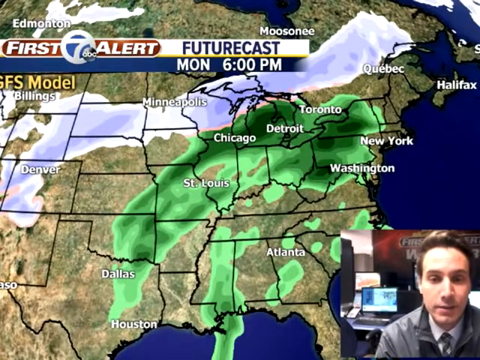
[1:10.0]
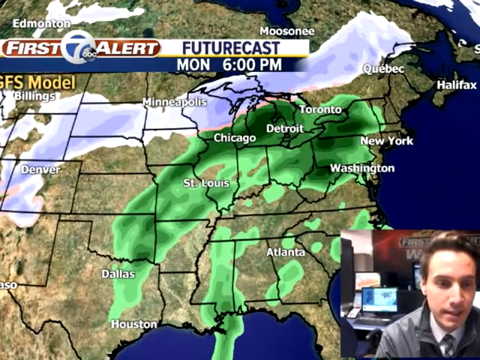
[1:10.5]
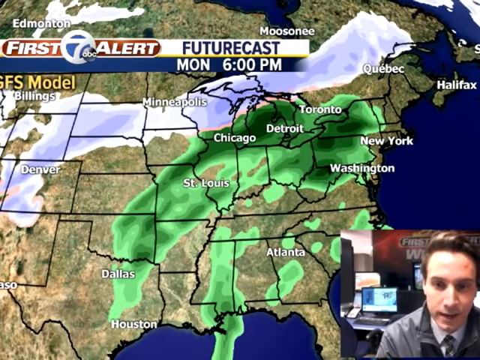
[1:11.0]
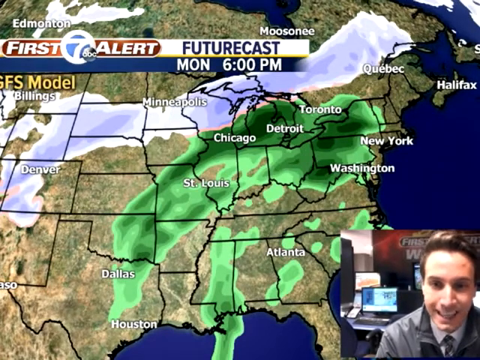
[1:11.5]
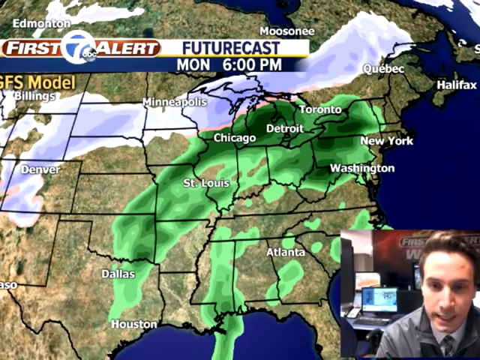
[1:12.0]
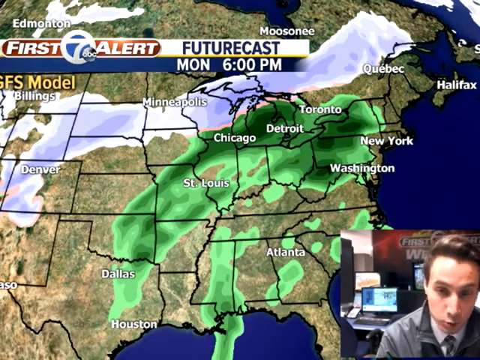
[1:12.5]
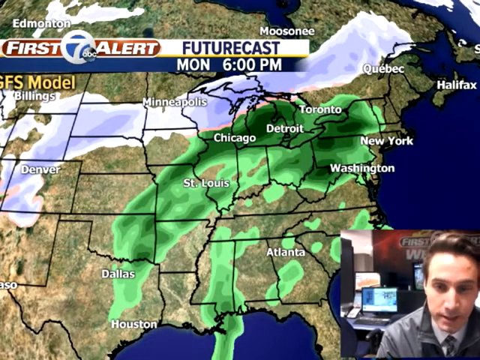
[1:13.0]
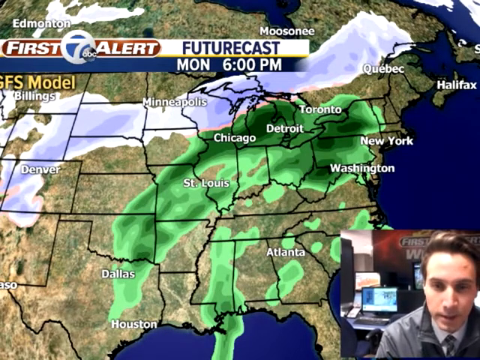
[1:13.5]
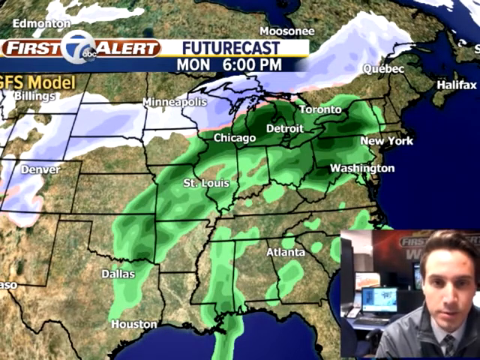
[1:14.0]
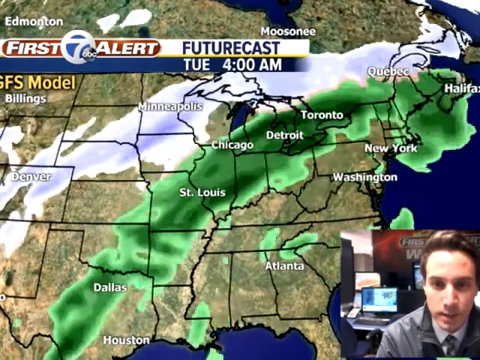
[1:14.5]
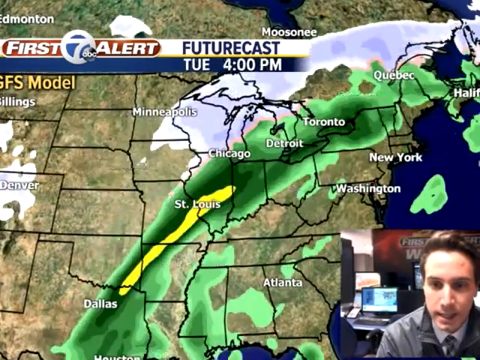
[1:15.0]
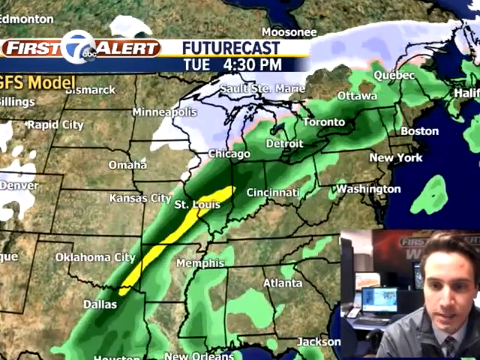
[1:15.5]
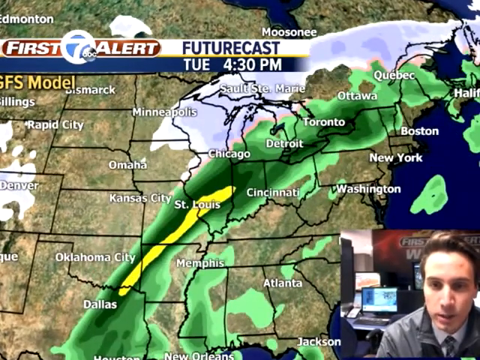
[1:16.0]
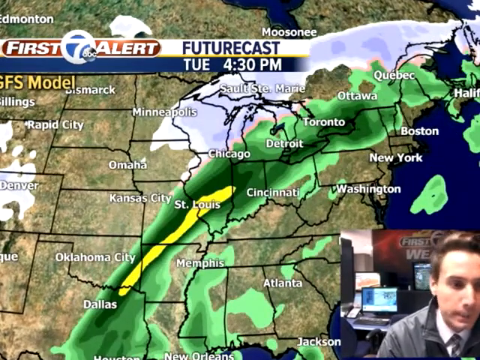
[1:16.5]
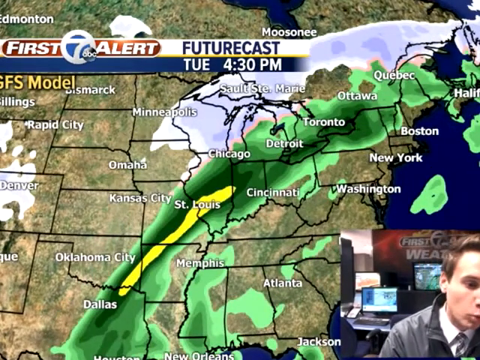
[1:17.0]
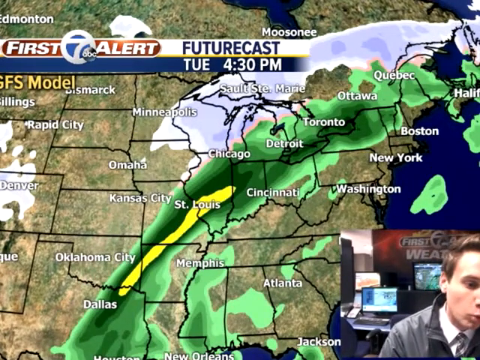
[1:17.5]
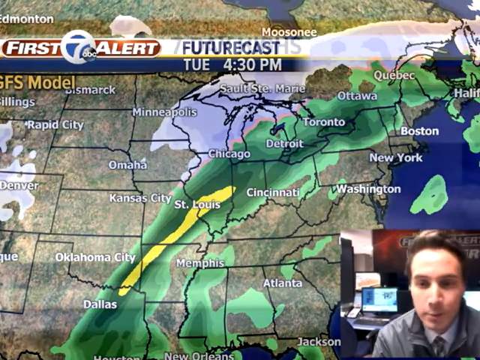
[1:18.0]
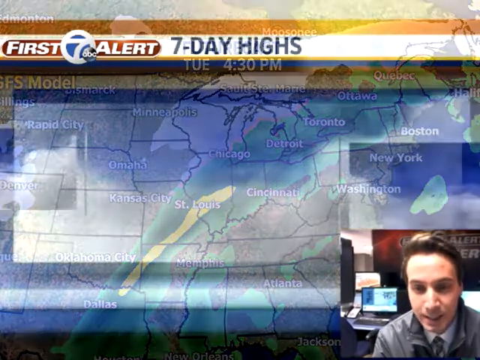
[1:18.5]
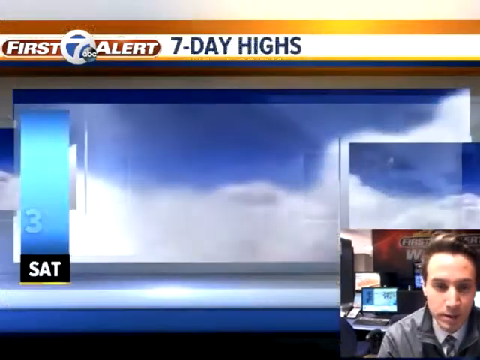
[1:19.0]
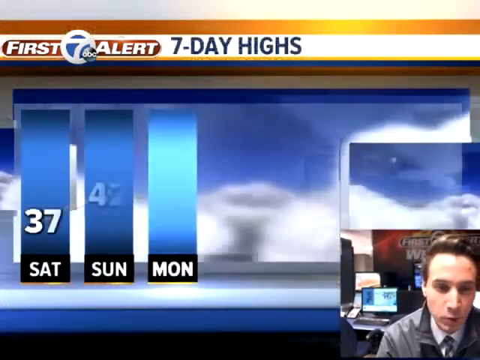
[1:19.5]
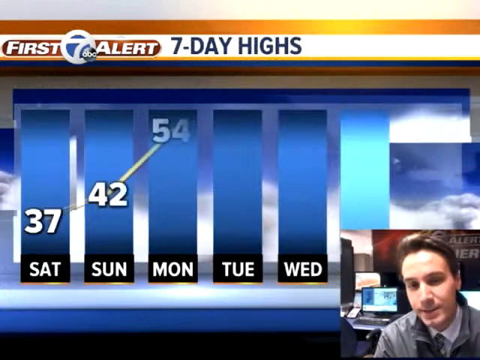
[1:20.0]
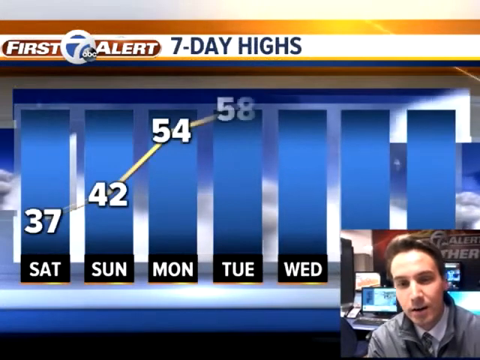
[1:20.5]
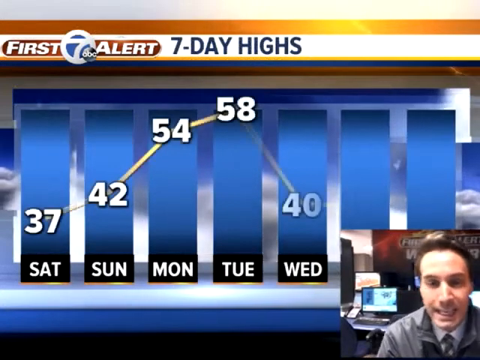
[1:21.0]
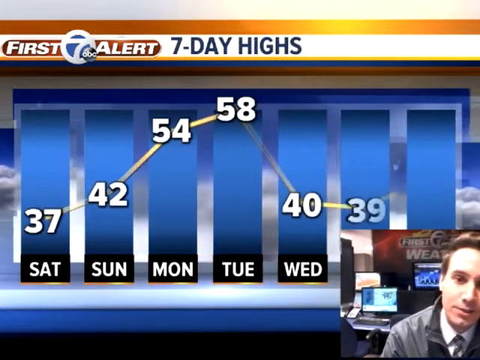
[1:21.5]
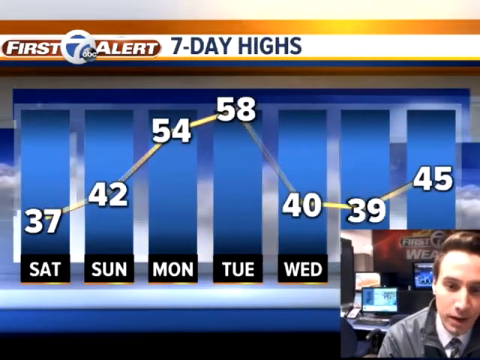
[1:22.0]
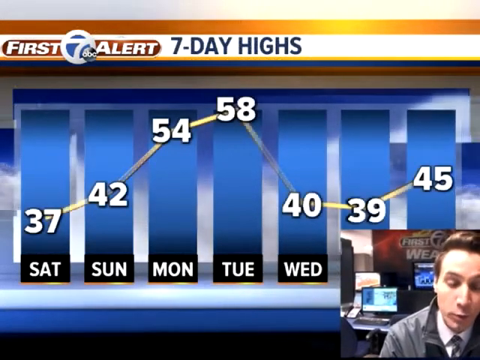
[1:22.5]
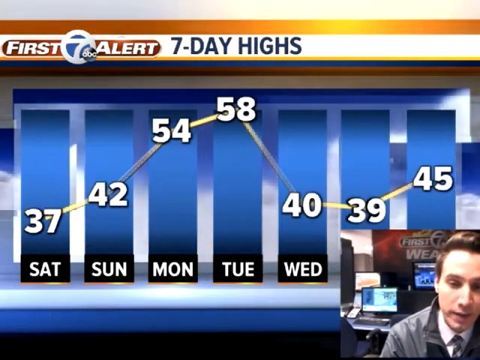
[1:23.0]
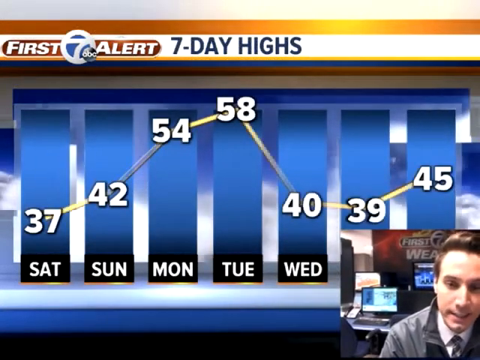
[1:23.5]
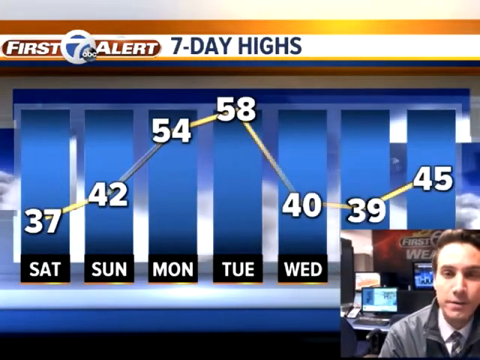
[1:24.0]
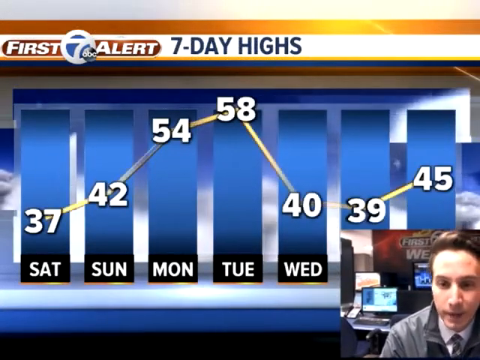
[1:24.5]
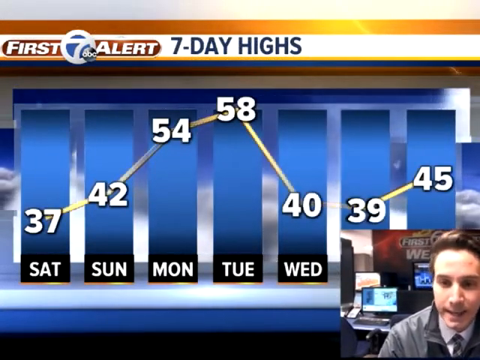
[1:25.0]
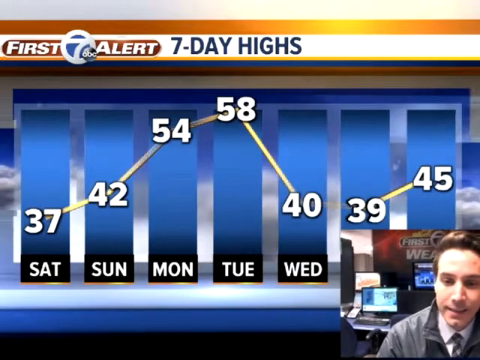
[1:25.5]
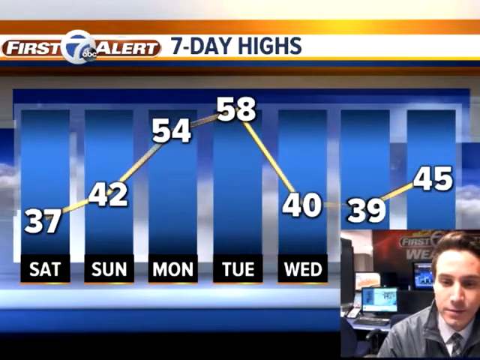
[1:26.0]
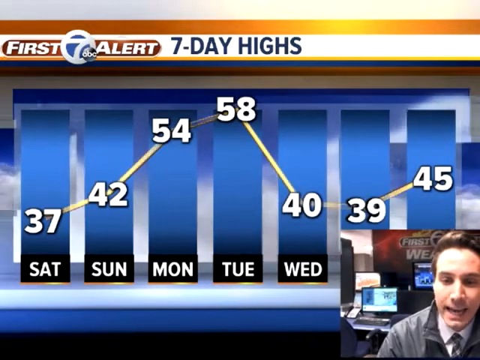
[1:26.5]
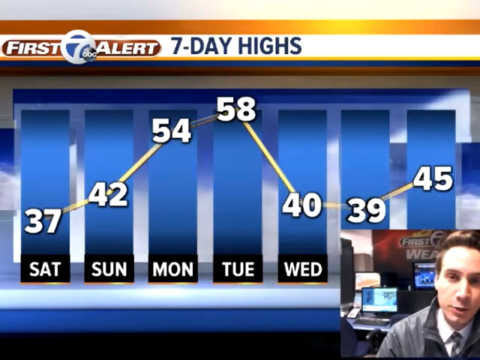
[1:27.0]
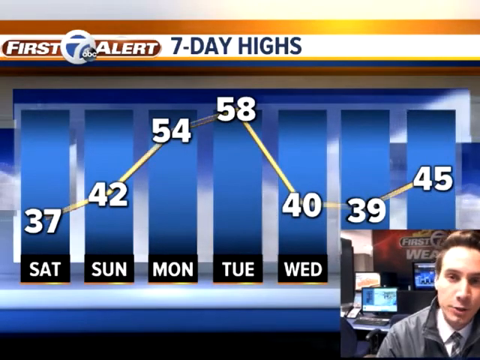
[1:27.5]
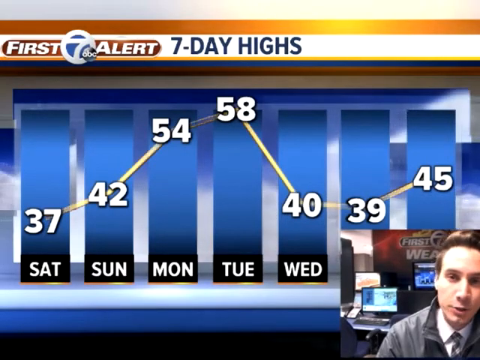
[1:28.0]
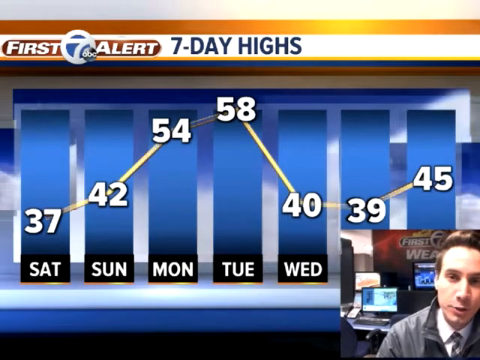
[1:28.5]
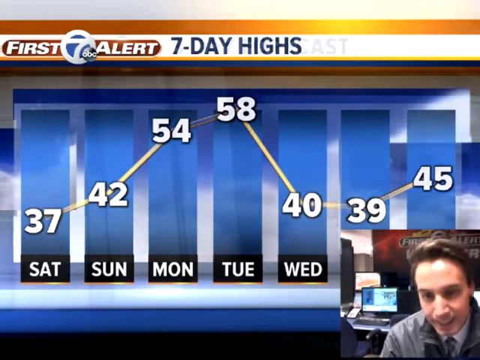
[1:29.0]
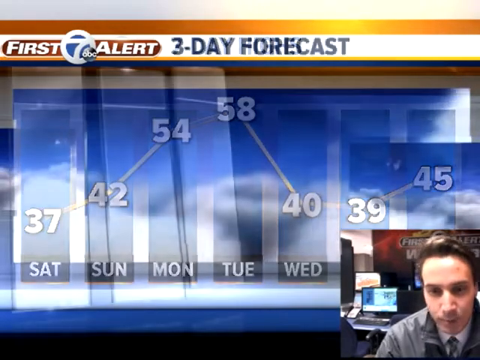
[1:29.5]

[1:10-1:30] The same hourly forecast appears: 6 a.m. 14 and 22, 8 a.m. 16 and 25, 10 a.m. 21 and 30 degrees, then 26 and 34, 2 p.m. 28 and 36 degrees and 4 p.m. 30 to 37 degrees, falling to 28 and 35 and 26 to 33 degrees. A future cast lists Chicago, Detroit, Cleveland, New York and St. Louis. Chicago, Detroit, Toronto and Washington are then shown on the screen with a run of days of the week.